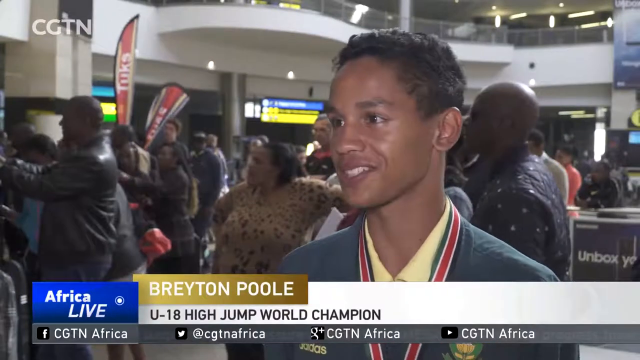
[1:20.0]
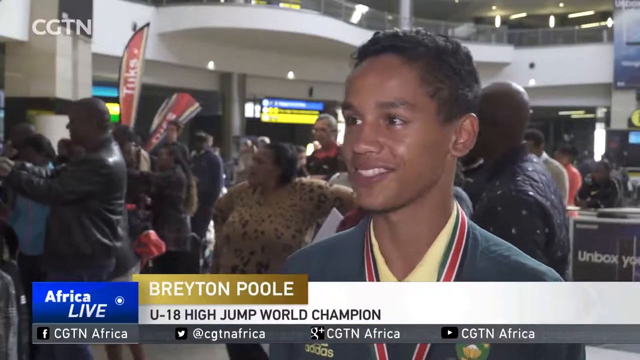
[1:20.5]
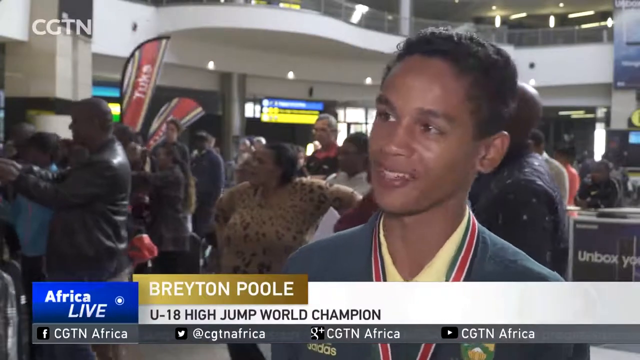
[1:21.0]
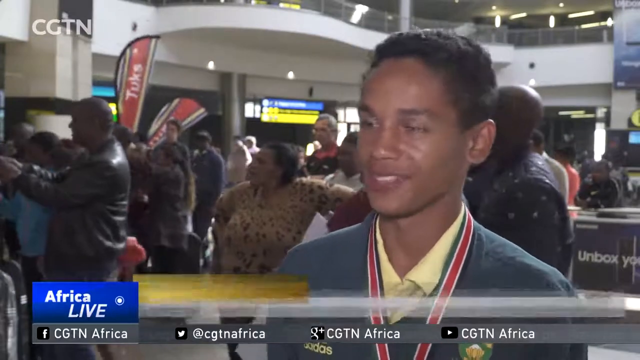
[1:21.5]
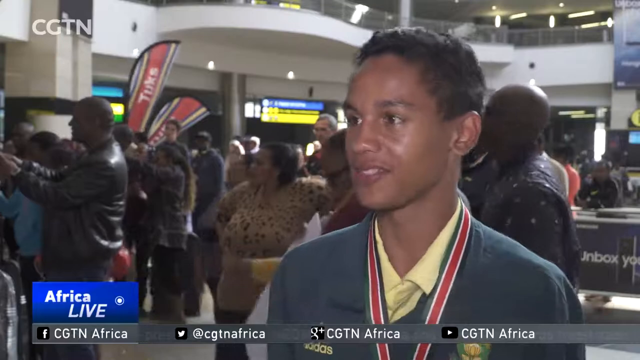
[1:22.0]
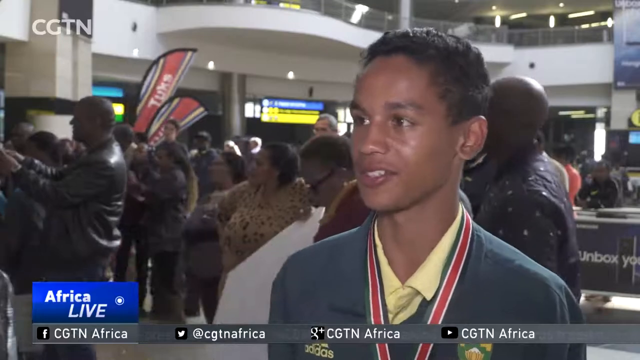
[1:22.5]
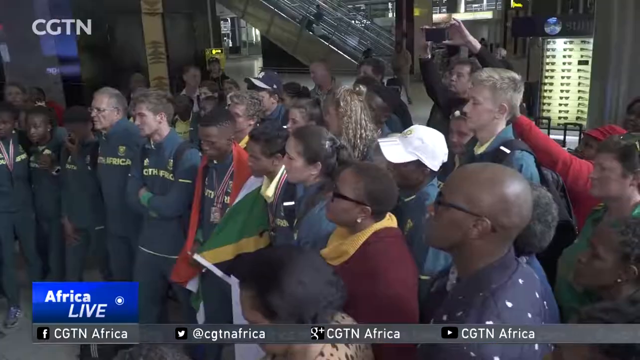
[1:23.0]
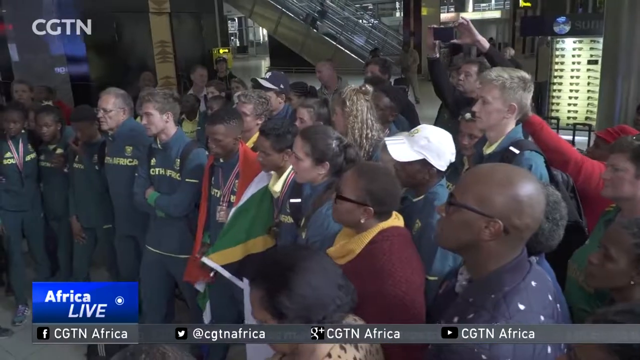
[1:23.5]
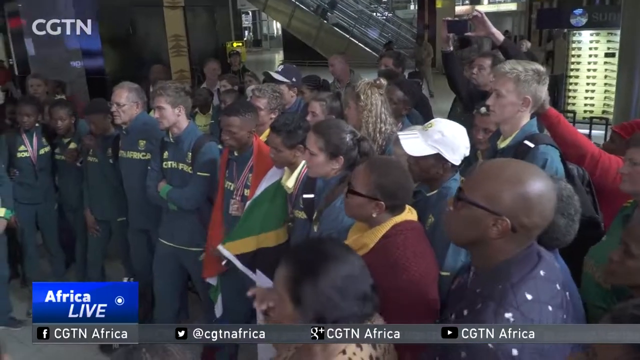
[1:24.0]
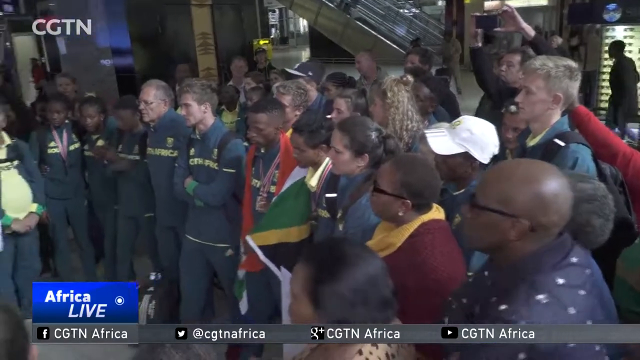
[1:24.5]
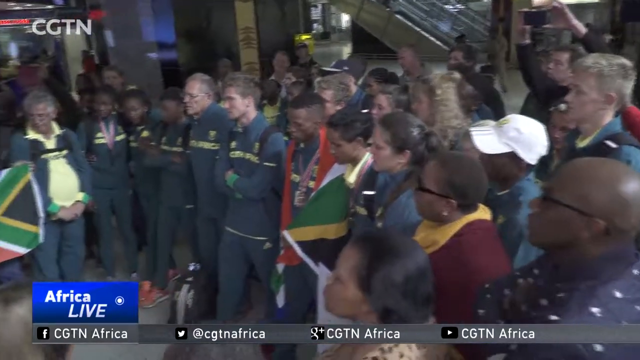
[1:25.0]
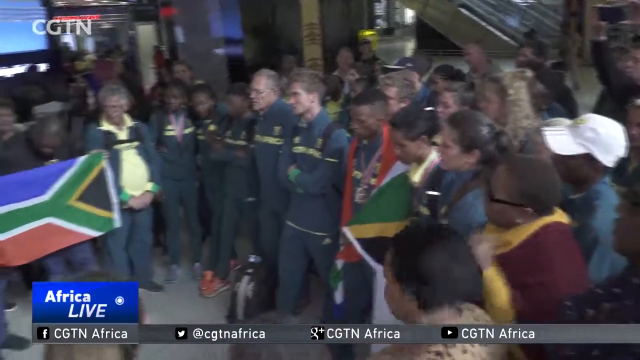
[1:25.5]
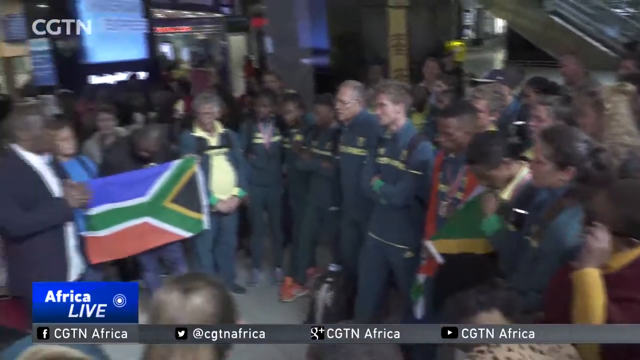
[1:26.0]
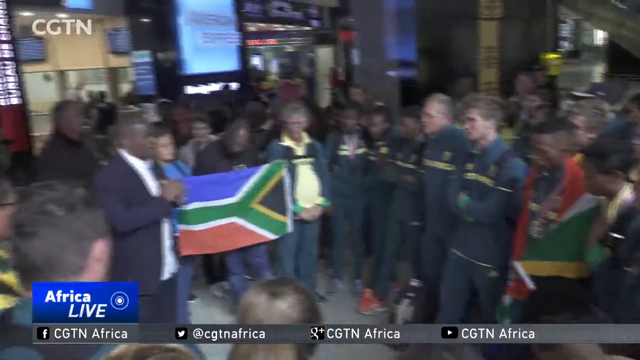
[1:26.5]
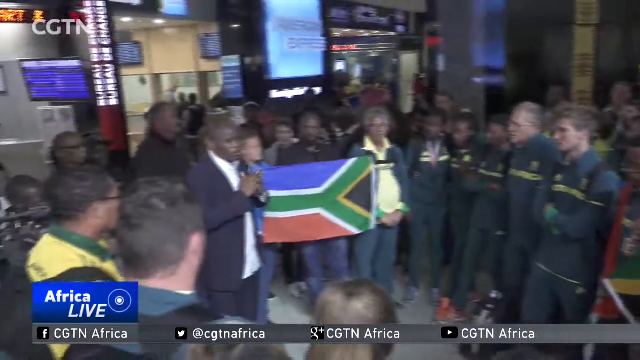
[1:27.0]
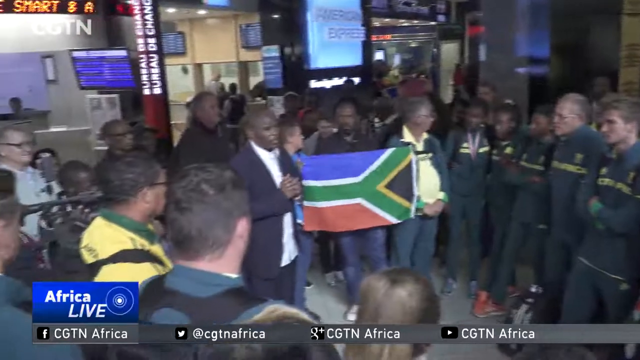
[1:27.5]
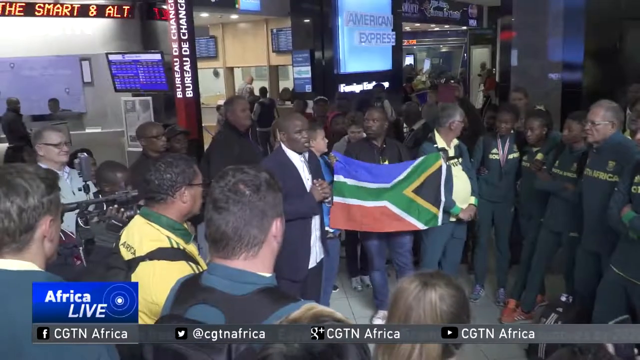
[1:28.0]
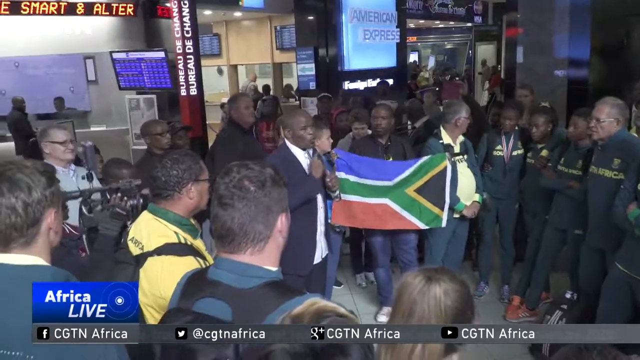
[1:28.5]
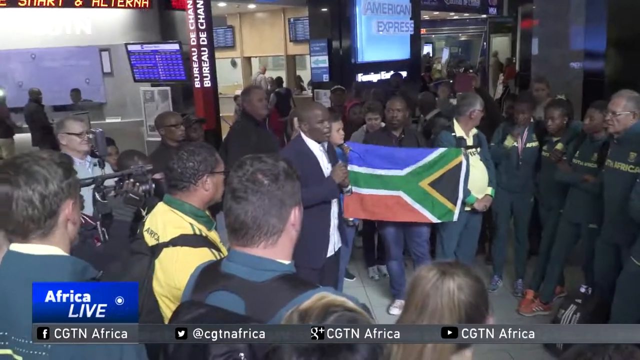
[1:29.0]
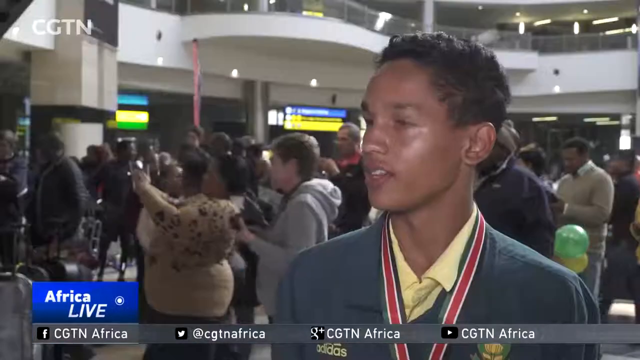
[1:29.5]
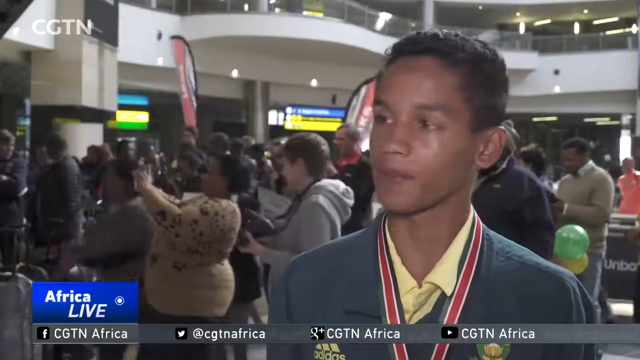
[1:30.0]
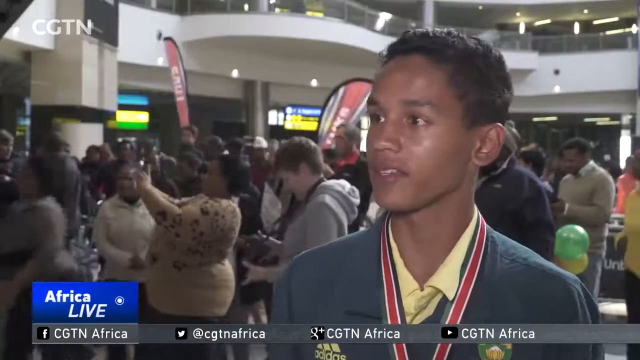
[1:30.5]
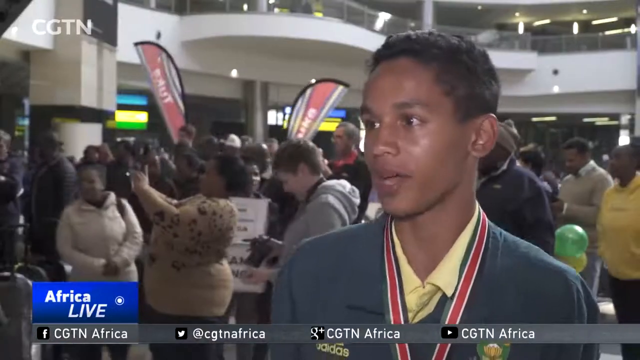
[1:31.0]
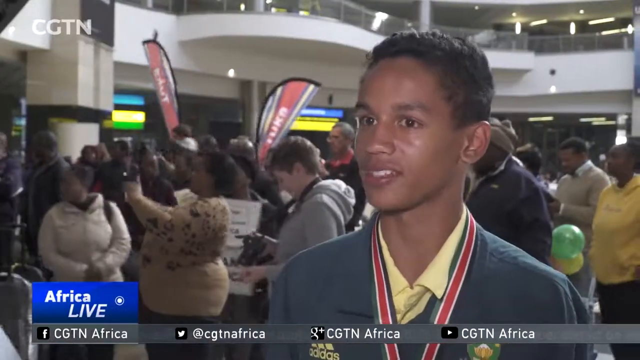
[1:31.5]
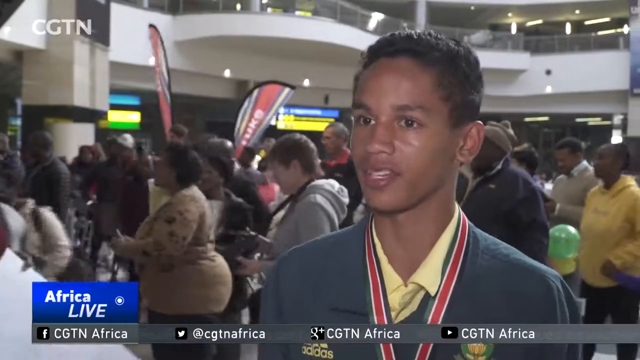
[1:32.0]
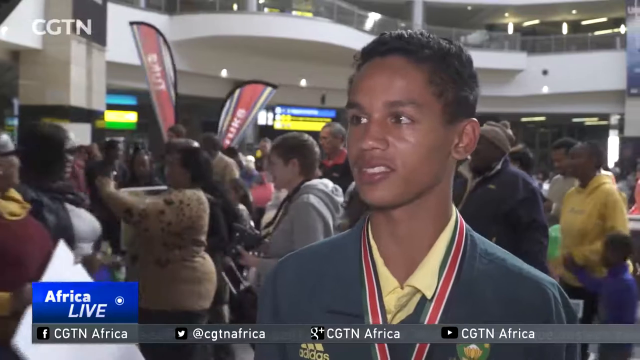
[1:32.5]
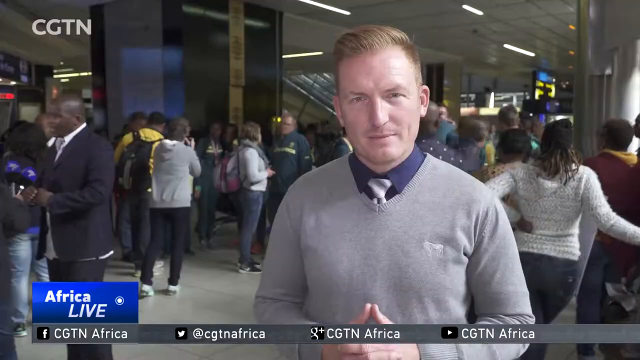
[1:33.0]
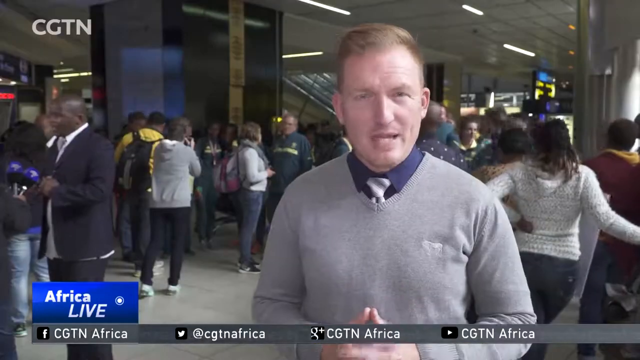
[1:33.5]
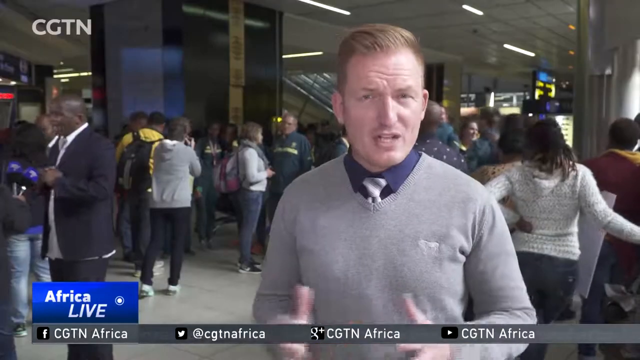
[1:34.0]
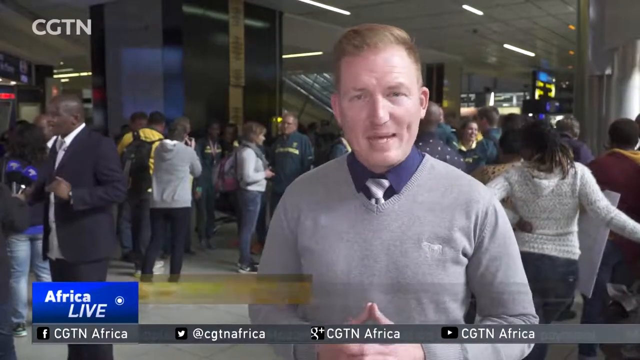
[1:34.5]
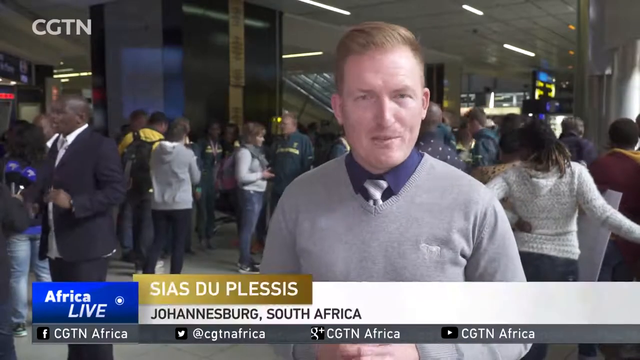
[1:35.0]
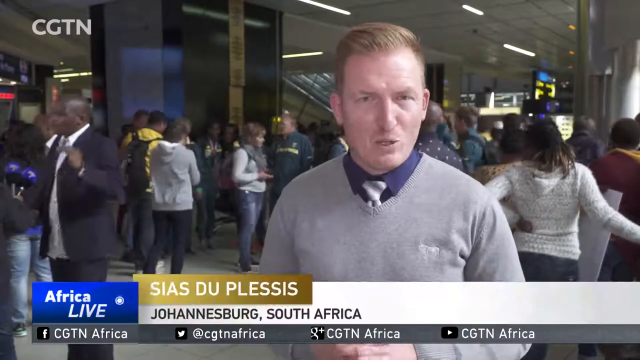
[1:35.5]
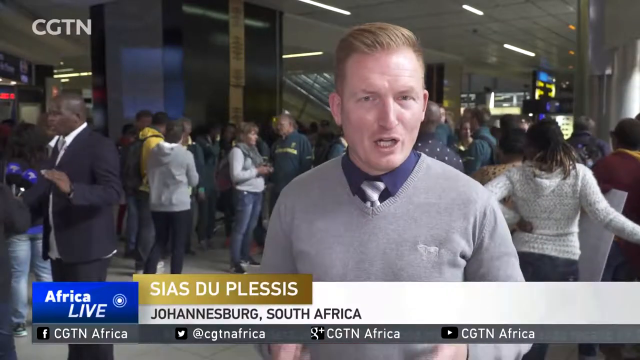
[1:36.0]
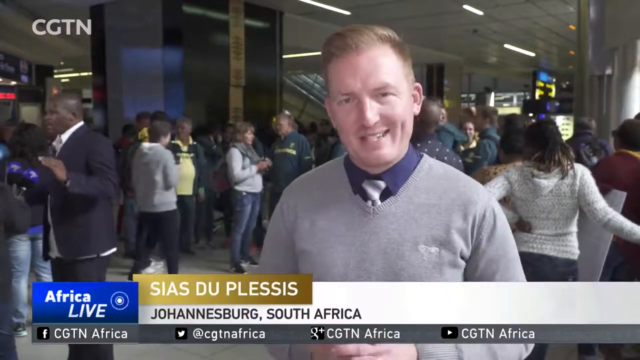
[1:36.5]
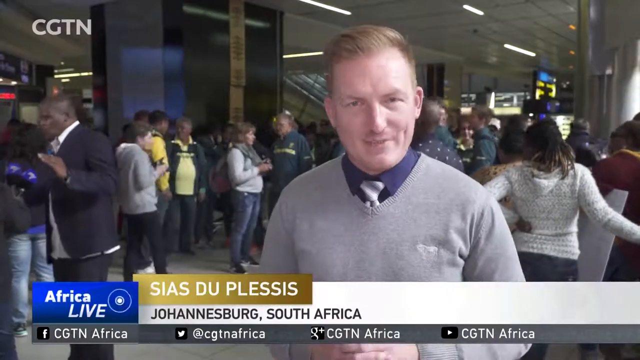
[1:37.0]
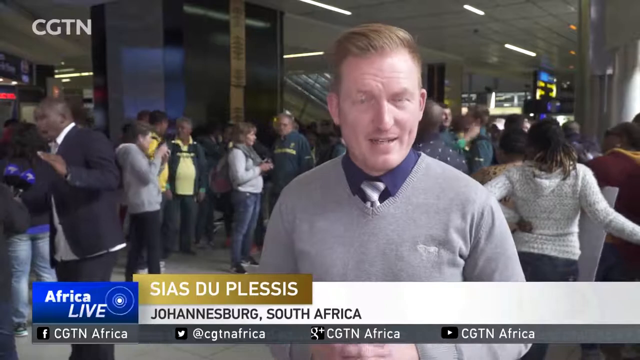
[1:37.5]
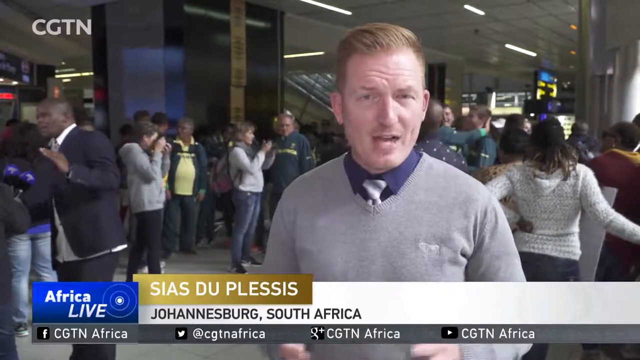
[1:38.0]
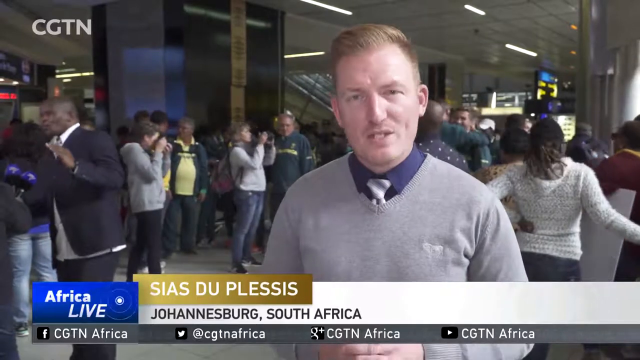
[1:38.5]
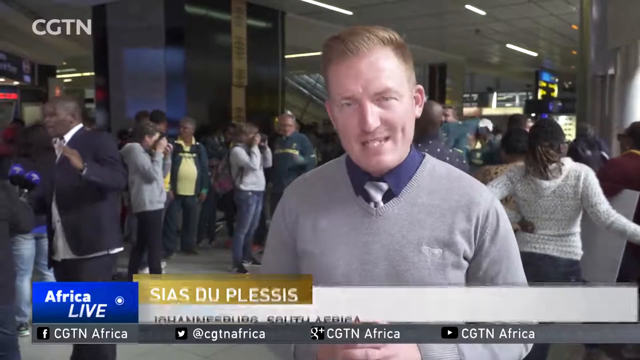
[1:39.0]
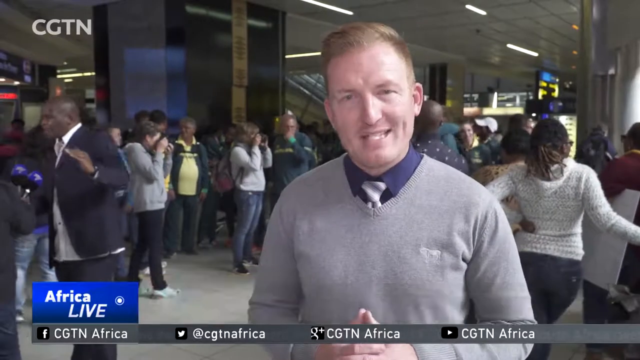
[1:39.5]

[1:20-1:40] A very young, thin, baby-faced African-American athlete with dark curly hair wears a medal around his neck on what appears to be a red strap with white edges, and a yellow collared shirt under his jacket. The banner below names him "Breyton Poole," the "U18 high jump world champion." "CGTN" is visible in the upper left corner, and the lower left corner says "Africa Live" in a blue banner. The camera then turns to show lines of athletes going from left to right, along with people who might be coaches since they look older, a mix of black and white athletes. In the background is a very modern airport with shopping and escalators. Someone holds the South African flag and banners are moved around. Then the newscaster appears, standing in a gray sweater with a collared shirt and tie; he is white, with reddish brown hair slicked back. His name is listed below as "Cssias Duplessis," from Johannesburg, South Africa.